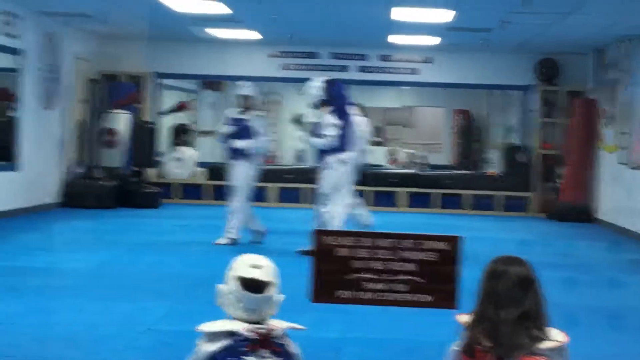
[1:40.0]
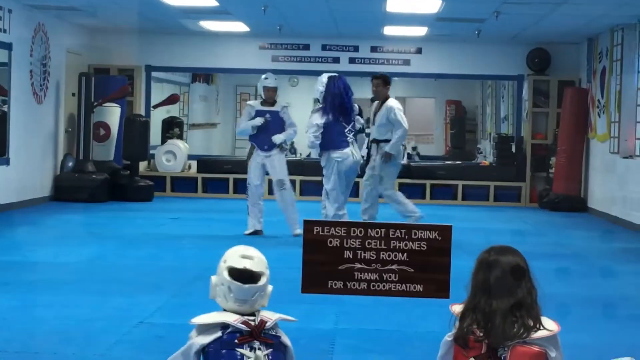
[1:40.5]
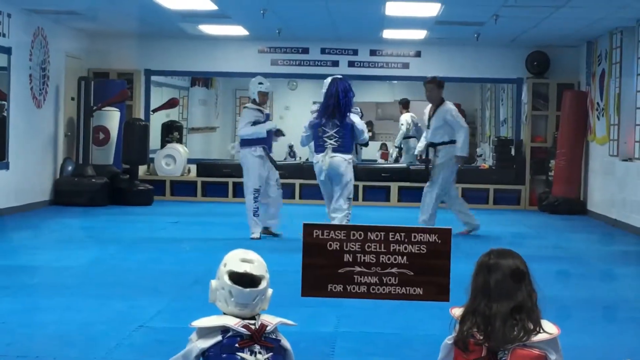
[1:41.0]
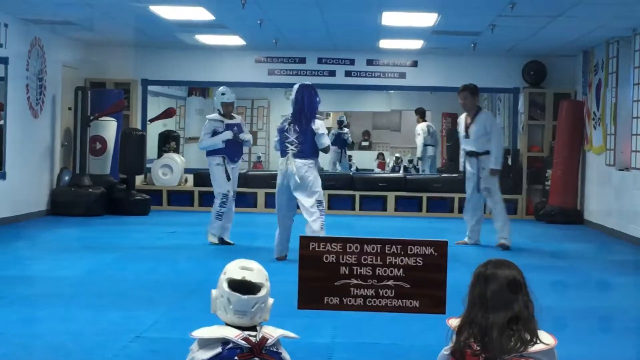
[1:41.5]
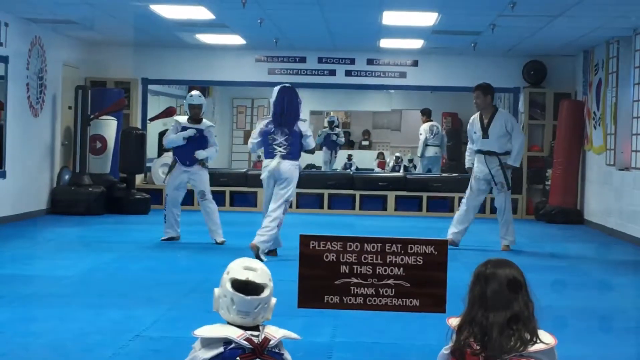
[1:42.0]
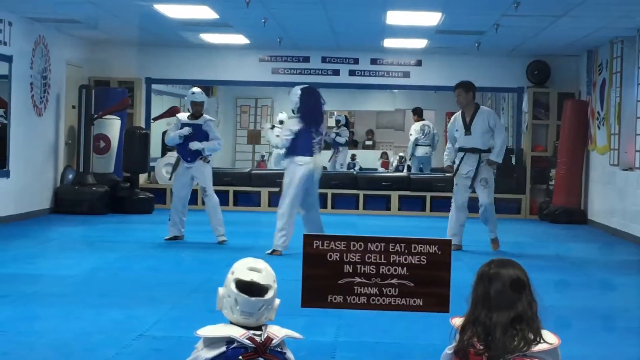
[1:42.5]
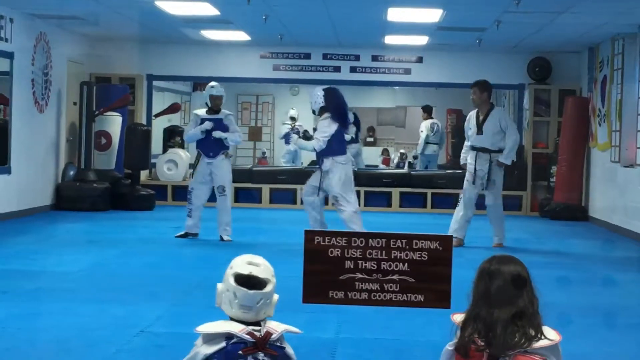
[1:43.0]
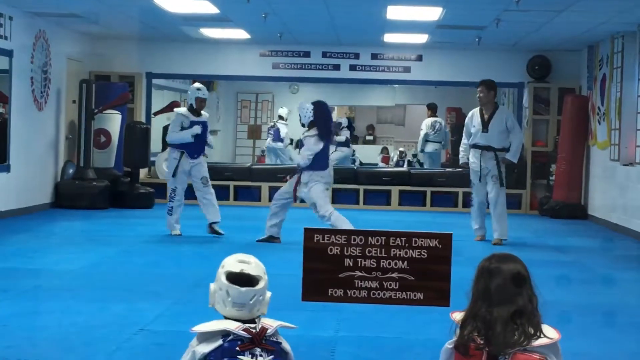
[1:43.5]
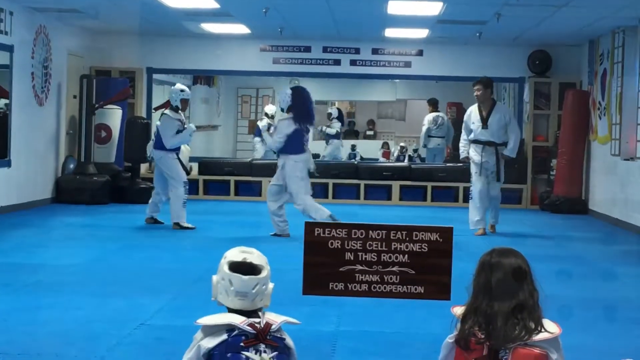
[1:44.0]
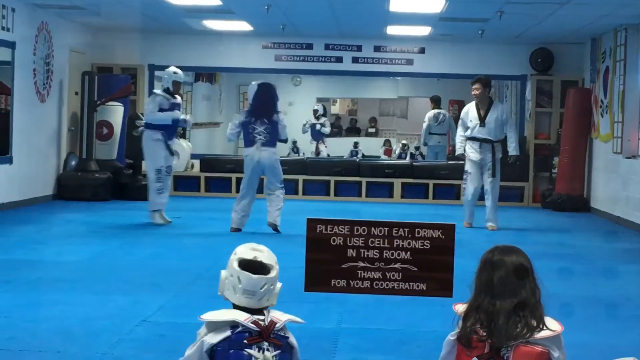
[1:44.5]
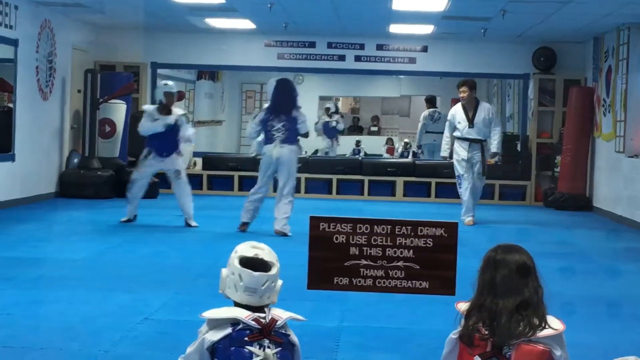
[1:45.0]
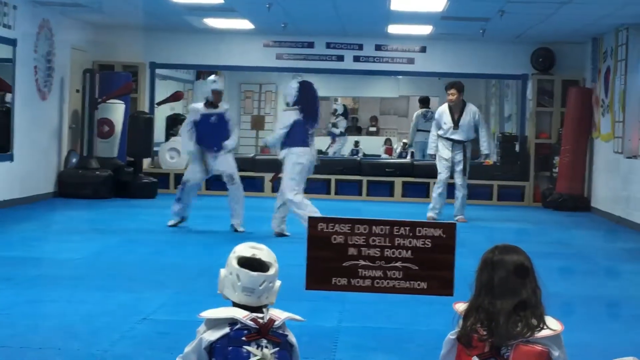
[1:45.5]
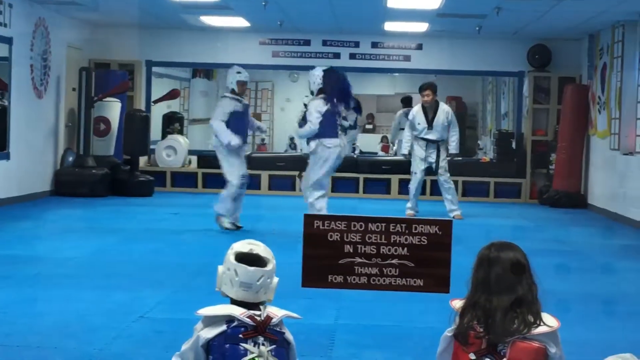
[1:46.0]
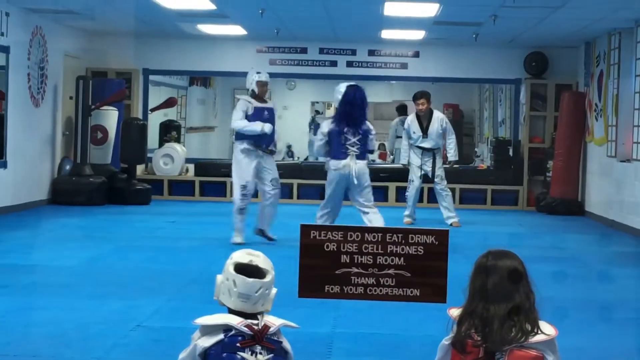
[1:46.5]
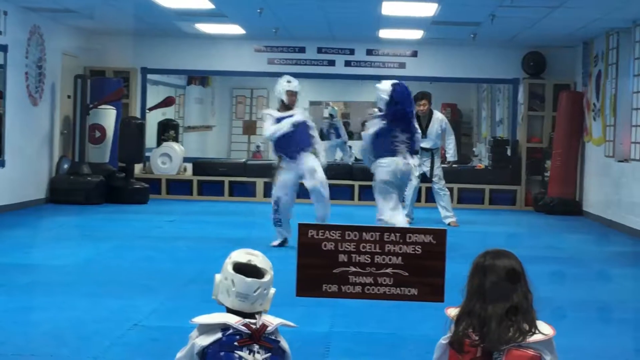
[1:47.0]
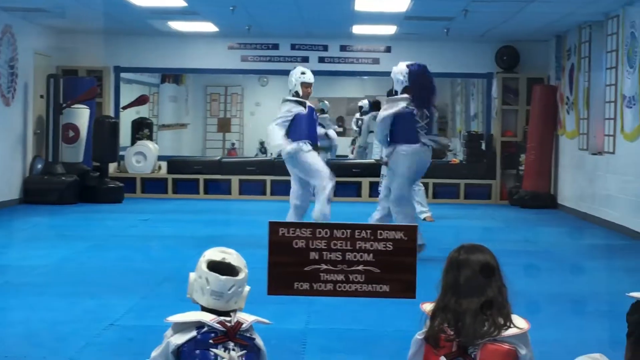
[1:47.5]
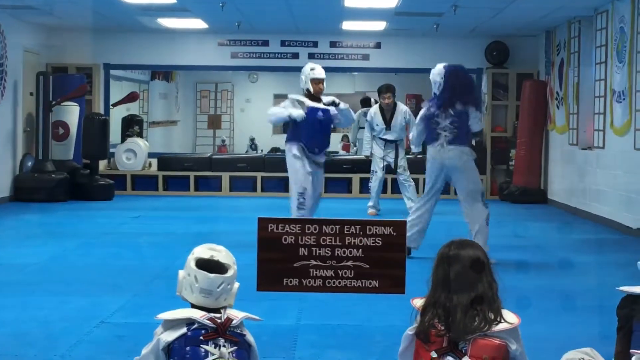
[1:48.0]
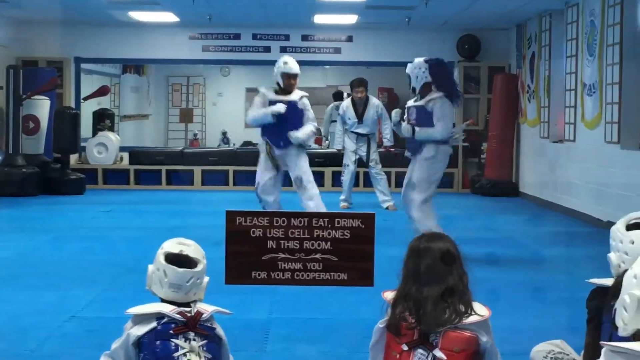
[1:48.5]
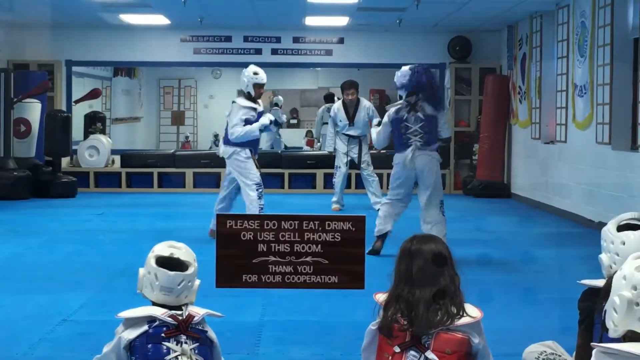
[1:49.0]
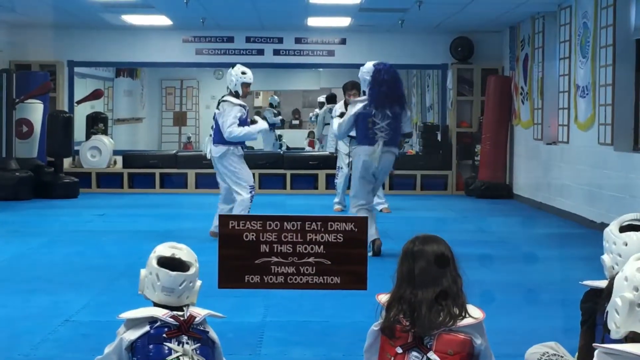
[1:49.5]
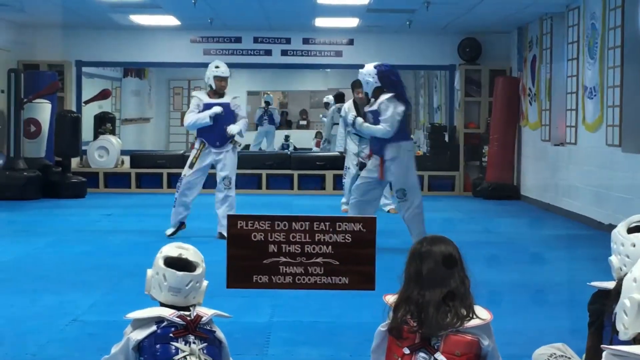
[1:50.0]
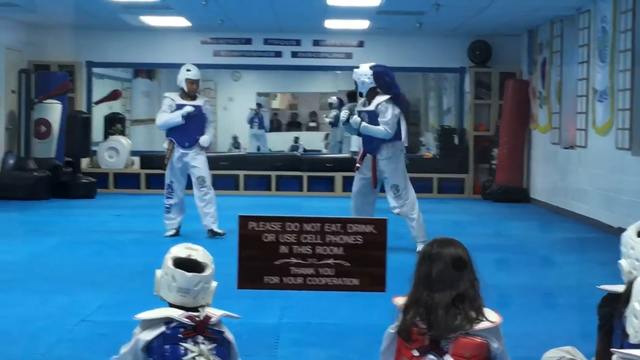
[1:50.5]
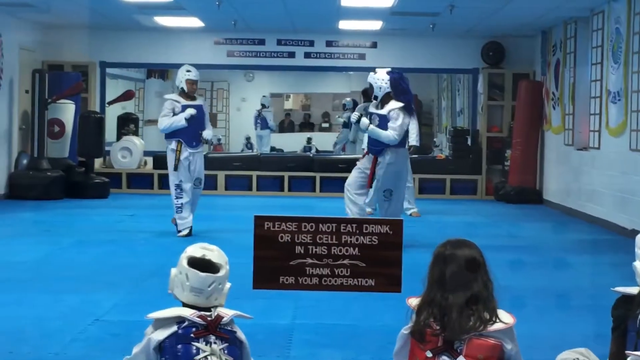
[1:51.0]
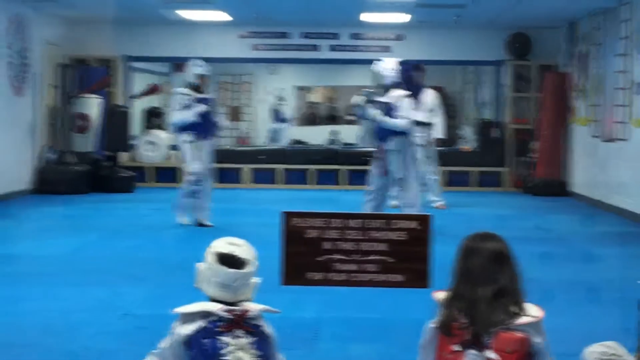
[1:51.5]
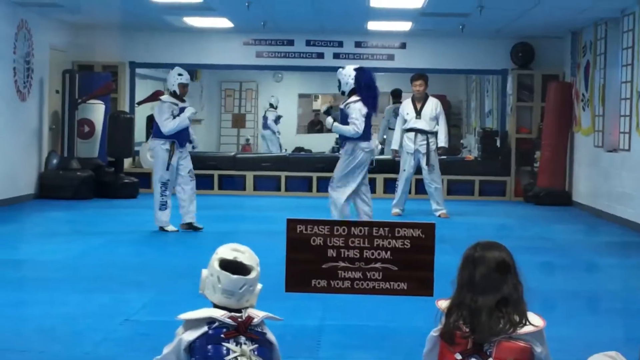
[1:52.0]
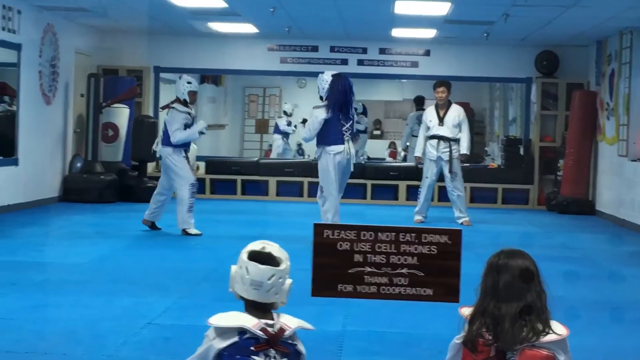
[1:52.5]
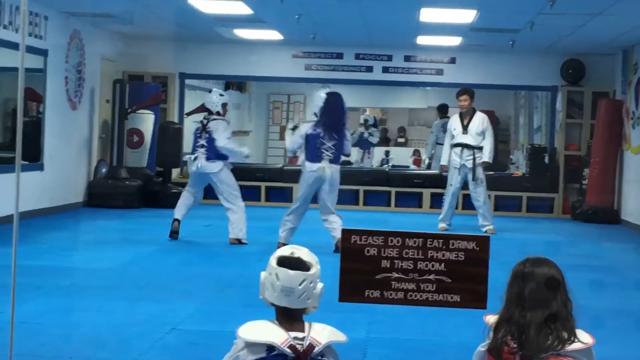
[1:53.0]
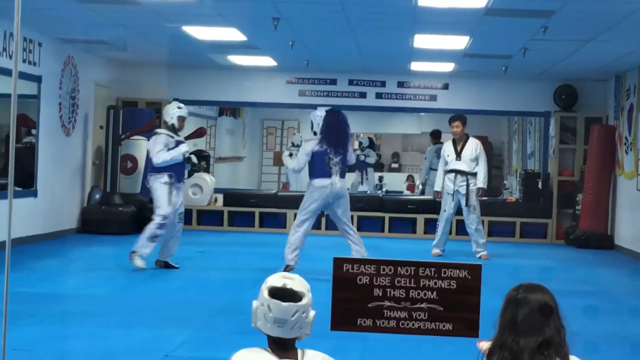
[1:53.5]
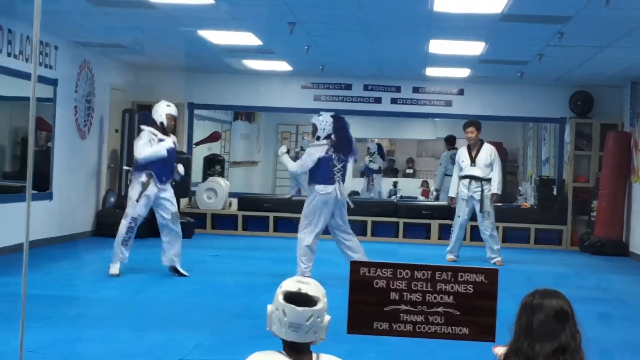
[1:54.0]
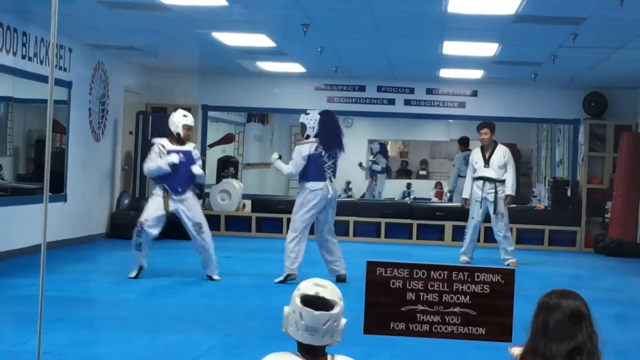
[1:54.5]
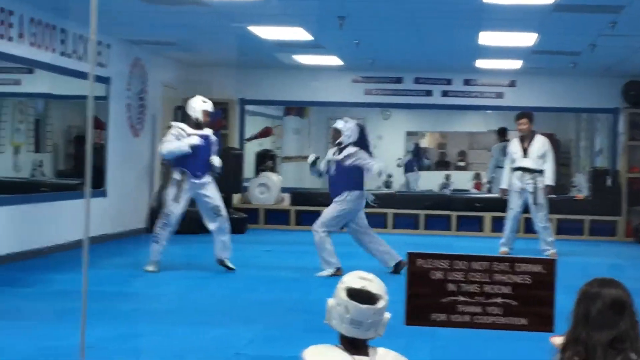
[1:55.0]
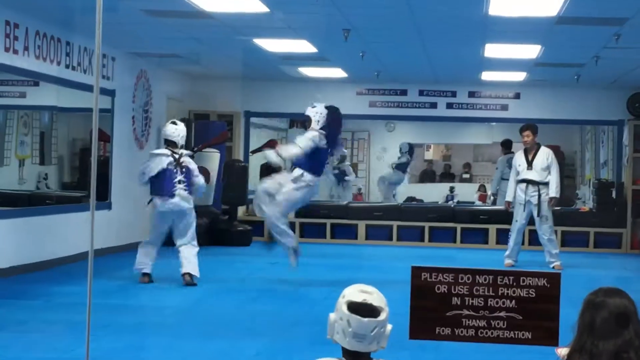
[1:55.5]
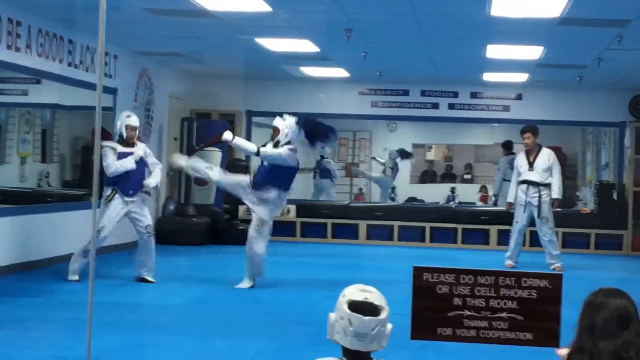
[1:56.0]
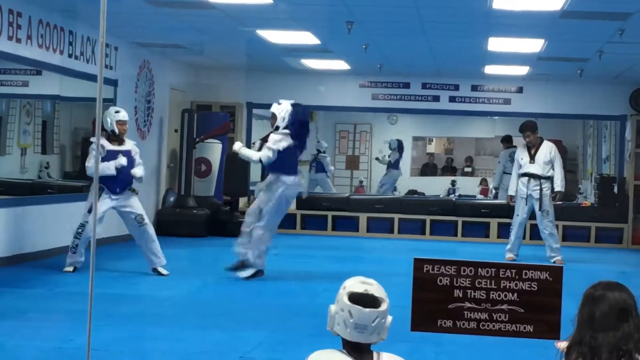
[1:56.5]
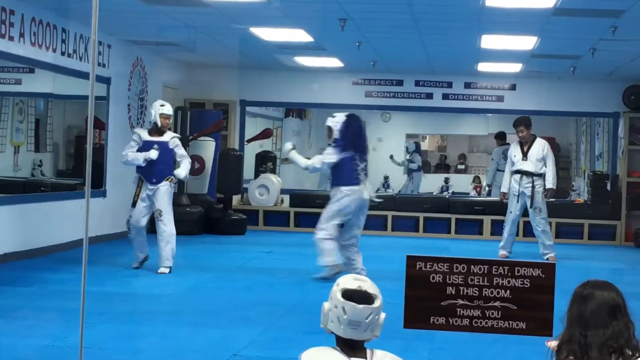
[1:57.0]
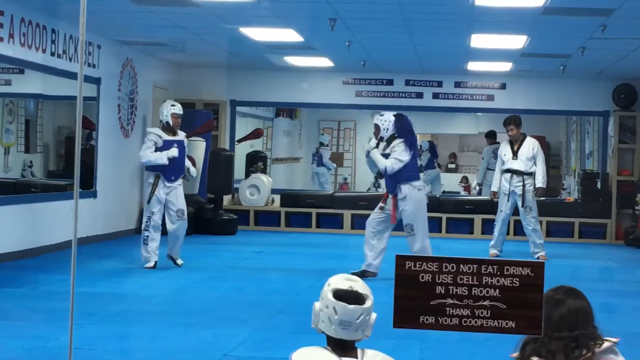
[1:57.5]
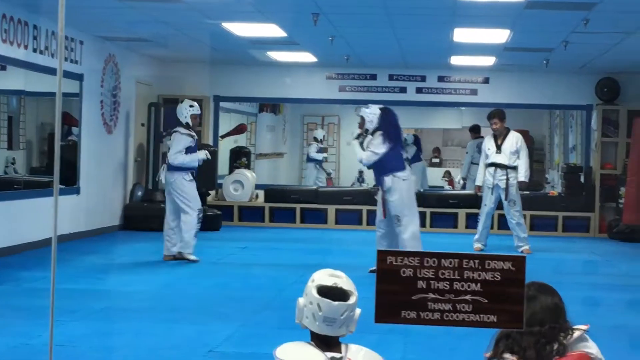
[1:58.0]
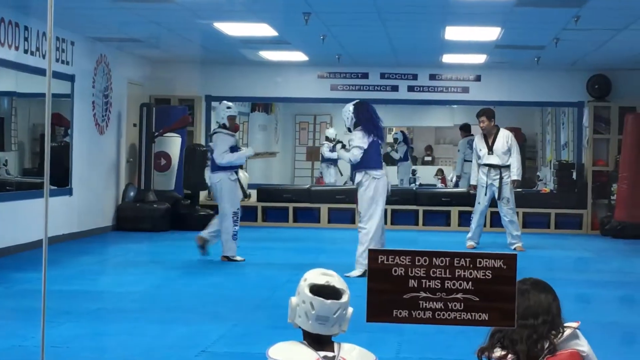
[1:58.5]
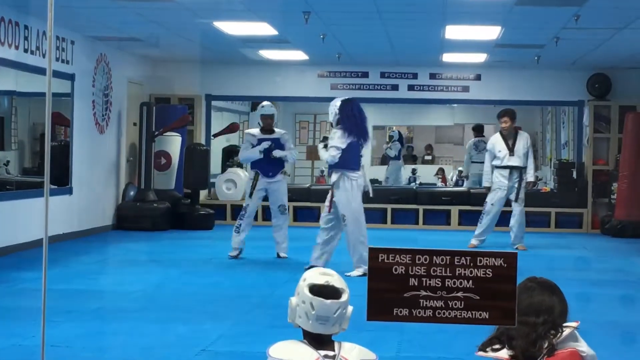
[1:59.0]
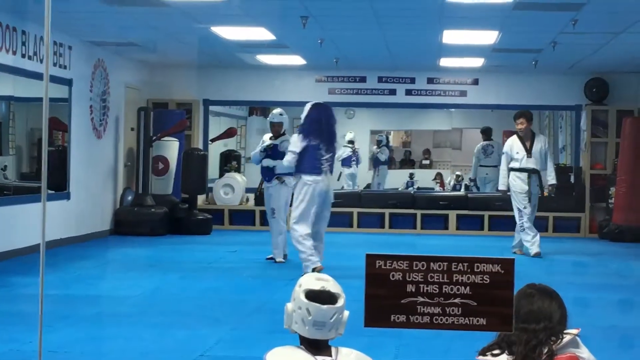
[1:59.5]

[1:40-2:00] In the same area, the two fighters are in the middle of the arena, which has bright blue flooring. The two women on the left side are the fighters, in mainly white outfits with blue safety vests and white headgear. The instructor, an older man, is to their right in a full white outfit with a black belt. Behind them is the large rectangular mirror reflecting the whole studio, and above it are the five signs reading respect, focus, defense, confidence and discipline. At the very bottom are the backs of some children's heads, including someone with long black hair who appears to be a girl and a boy wearing white headgear. The two women are in their fighting stance, moving their legs a lot, sort of back and forth and forward, in very defensive movements. The right woman does three kicks in the air while the left woman evades them.